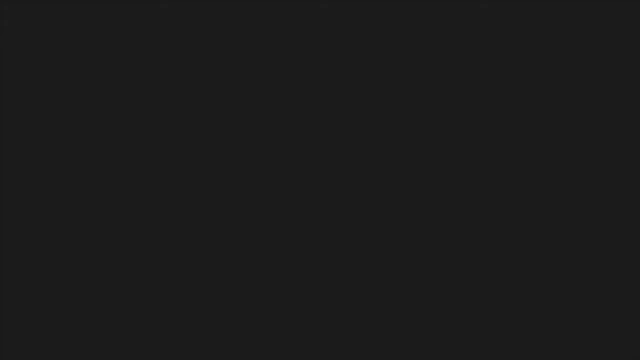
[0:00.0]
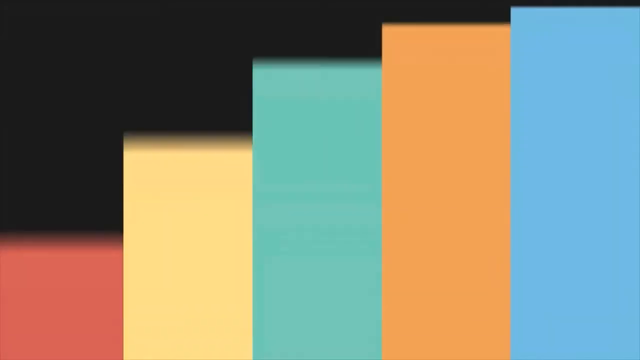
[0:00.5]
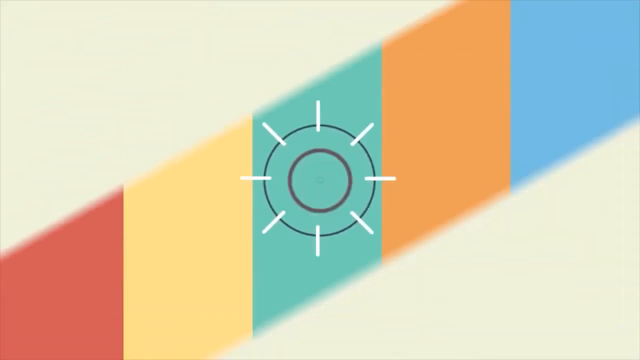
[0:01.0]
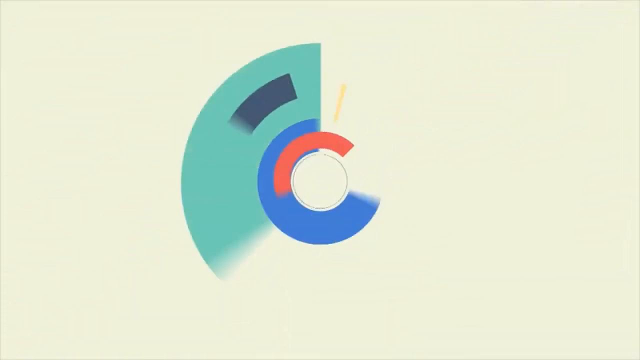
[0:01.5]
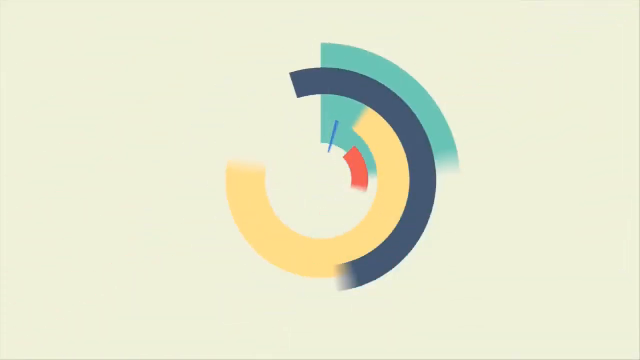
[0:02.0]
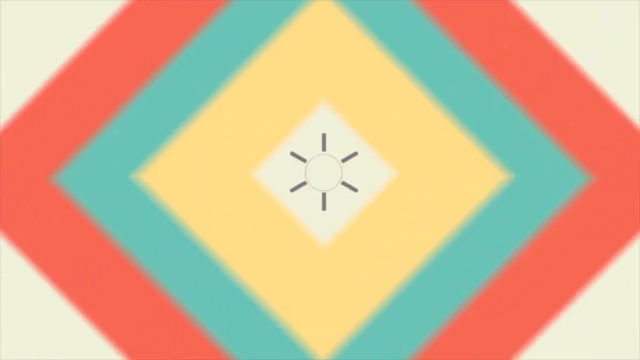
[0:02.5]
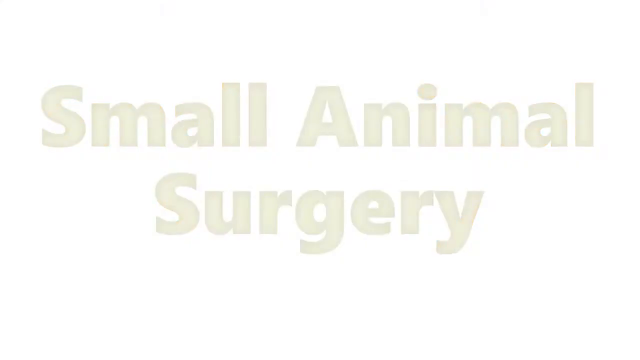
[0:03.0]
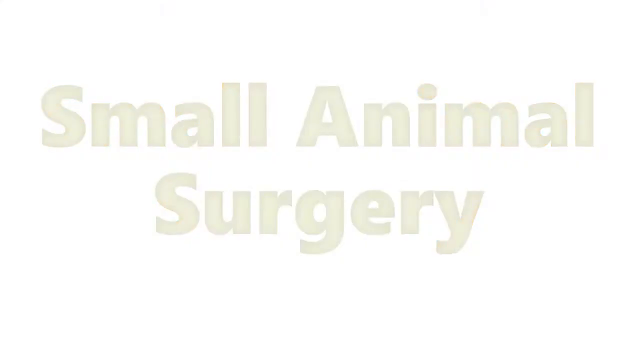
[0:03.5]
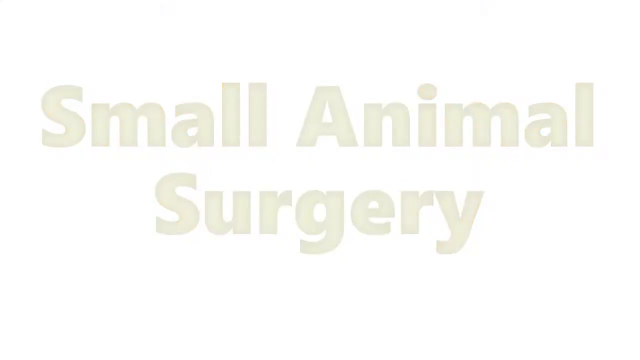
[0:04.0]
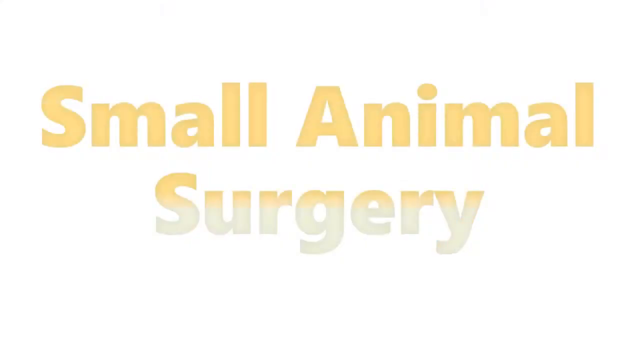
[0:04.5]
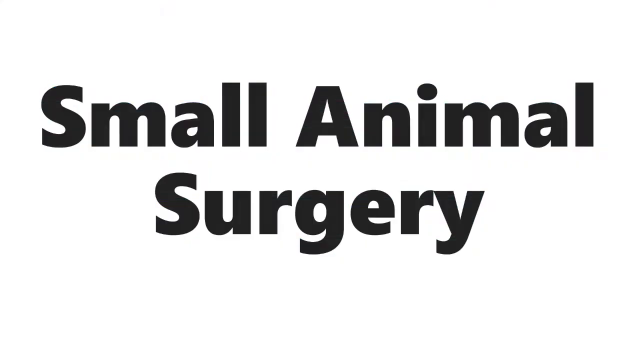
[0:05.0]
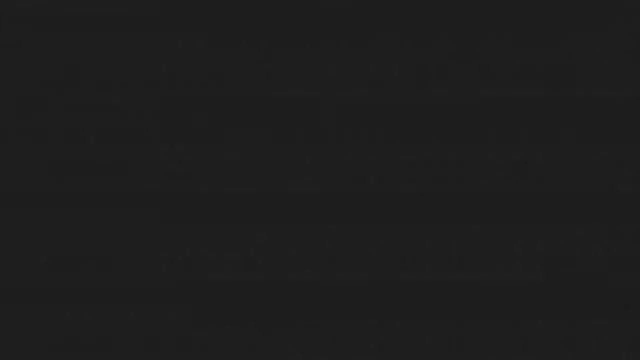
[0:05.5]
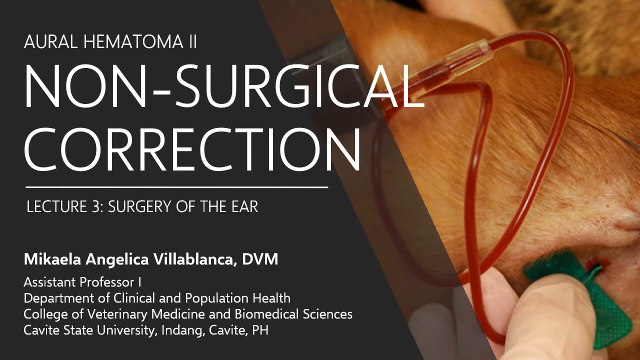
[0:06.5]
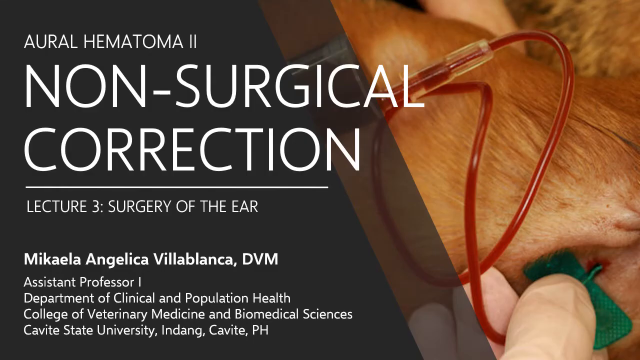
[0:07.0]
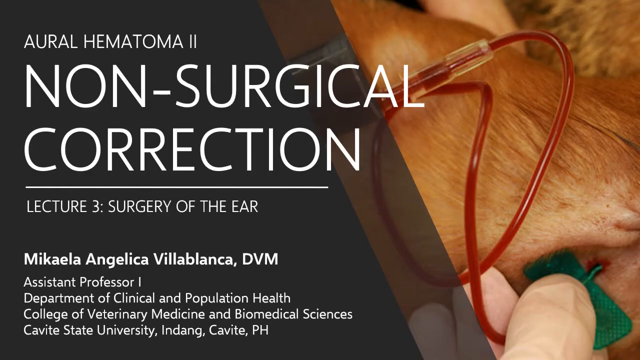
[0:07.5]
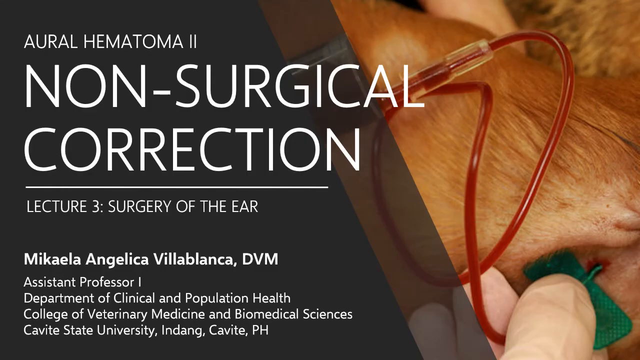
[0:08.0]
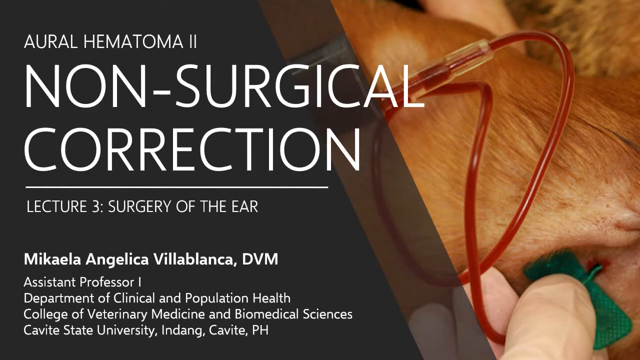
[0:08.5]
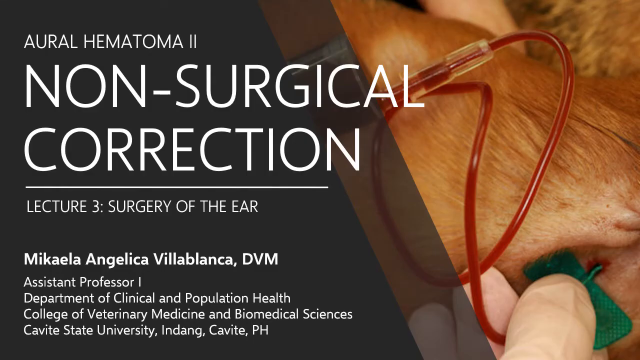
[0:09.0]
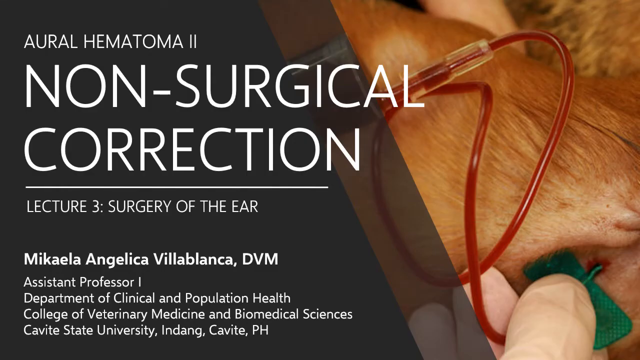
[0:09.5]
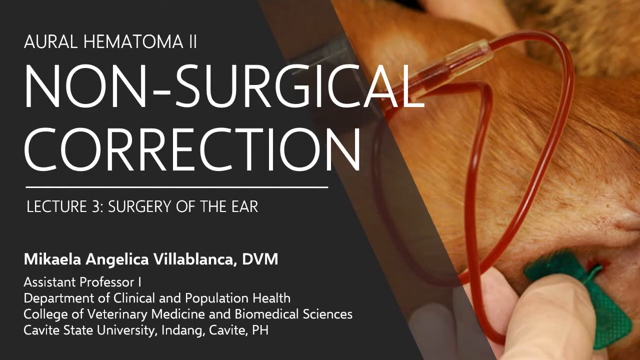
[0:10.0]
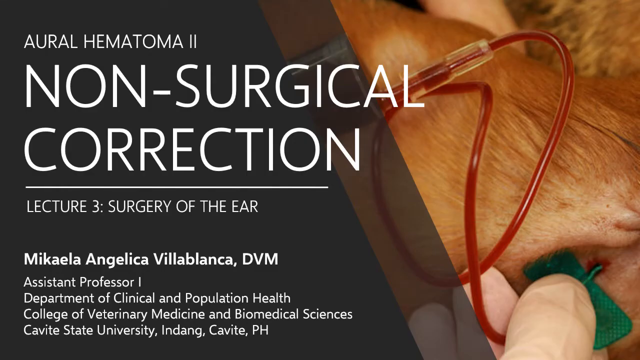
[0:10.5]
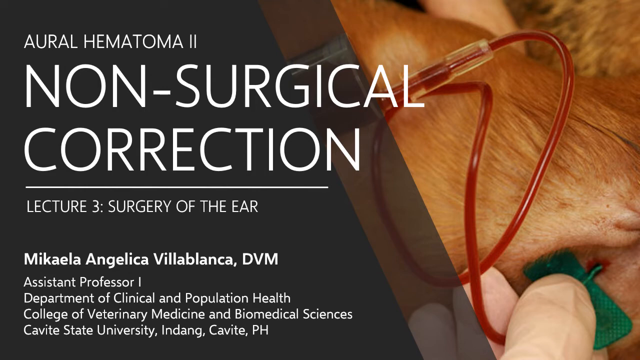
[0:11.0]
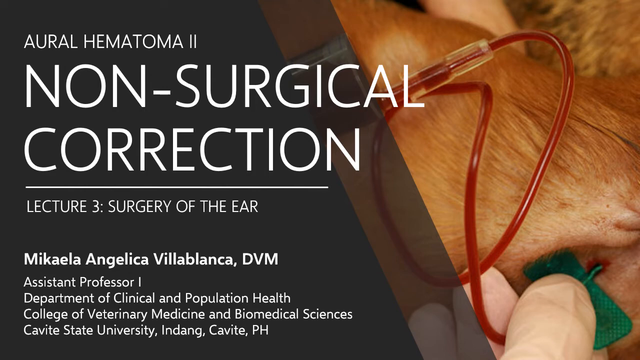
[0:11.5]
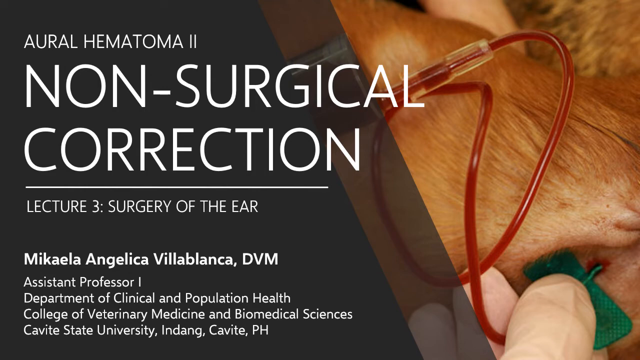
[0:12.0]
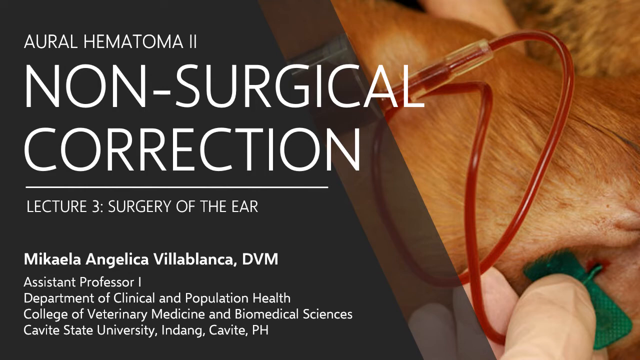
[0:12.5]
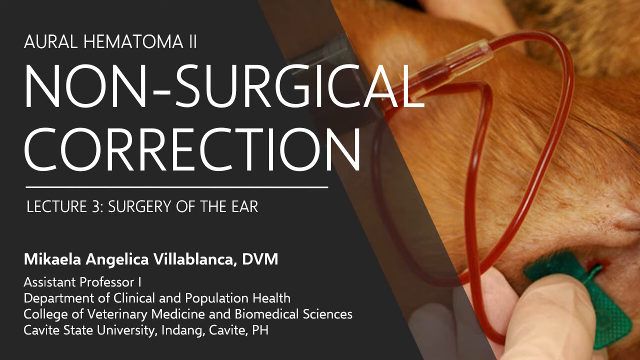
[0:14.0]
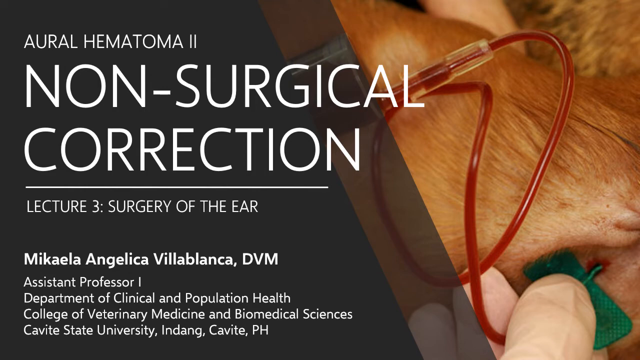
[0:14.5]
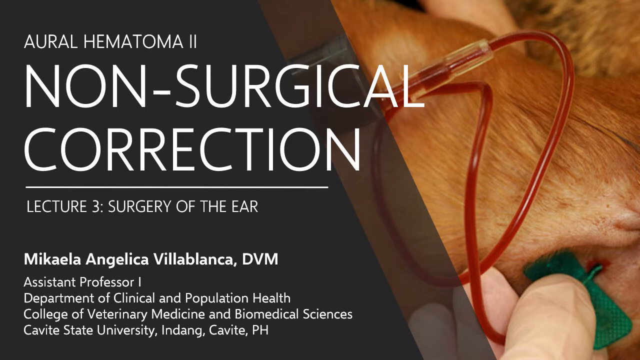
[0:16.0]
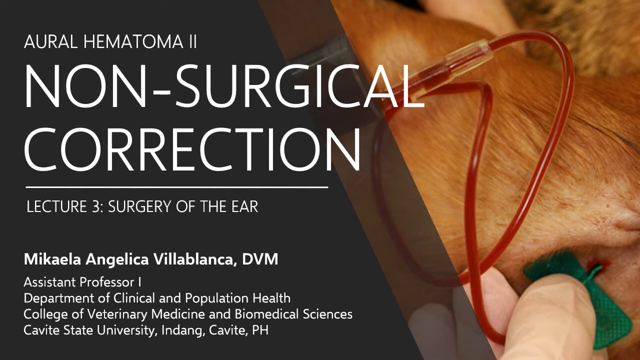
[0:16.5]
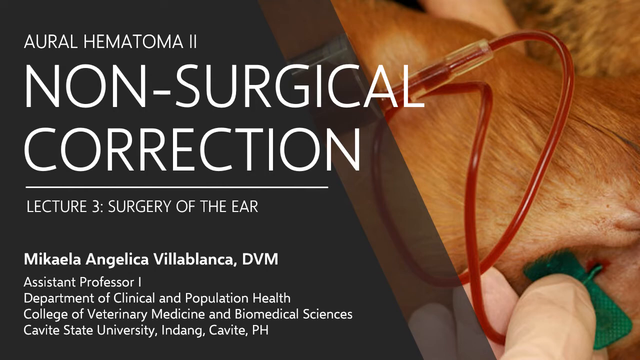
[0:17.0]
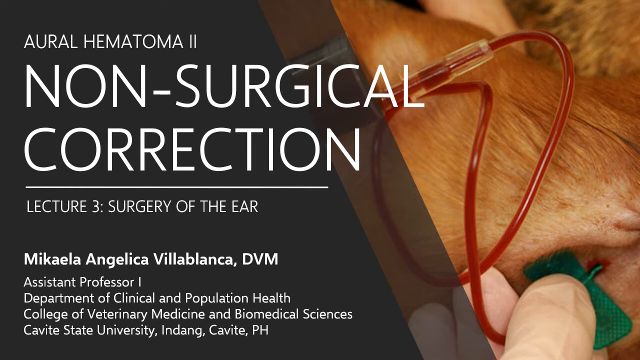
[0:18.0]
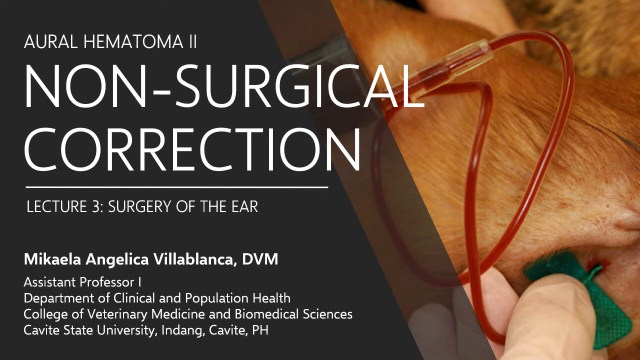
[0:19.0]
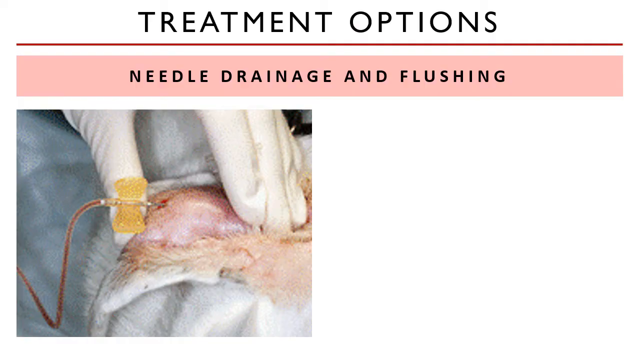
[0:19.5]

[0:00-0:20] The background is all black, and squares of different colours, orange, yellow and red, pop up. The background then turns beige, and circles of different colours appear, then diamonds in the same colours as before. "Small animal surgery" appears in beige. The background then changes from black to green. On the left side, in white, the text reads "AURAL hematoma" over two lines, followed by "non-surgical correction." A line runs across, and text in different font sizes reads "lecture three, surgery of the ear, Michaela Angelica Villablanca, DVM" and "assistant professor one, department of clinical population health, veterinary medicine, biomedical sciences, CAVITE state university." A tube with blood going through it is visible on some type of animal; it is unclear which part of the animal is shown, though a little brown fur can be seen.